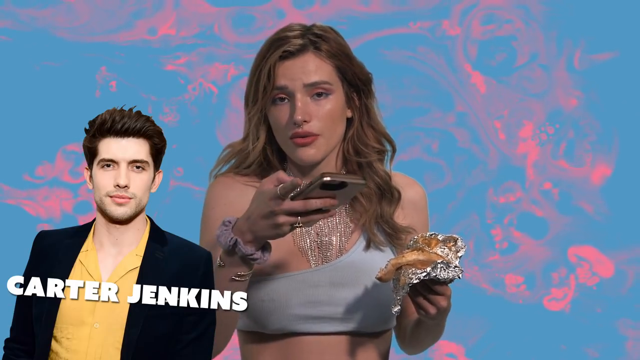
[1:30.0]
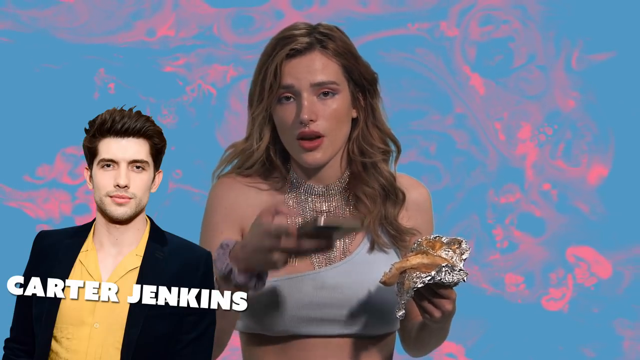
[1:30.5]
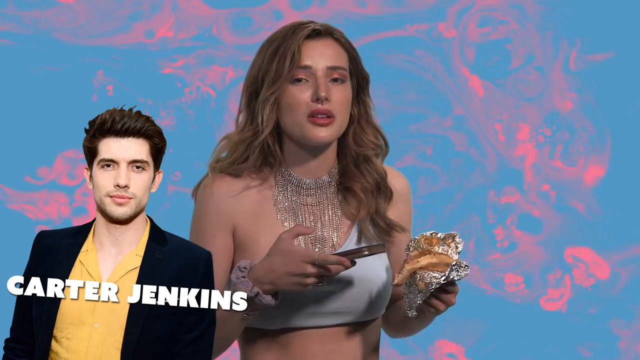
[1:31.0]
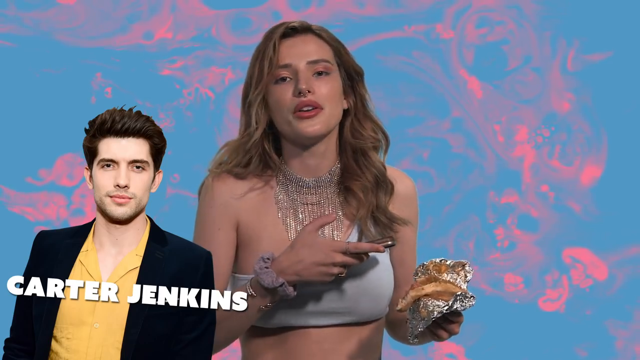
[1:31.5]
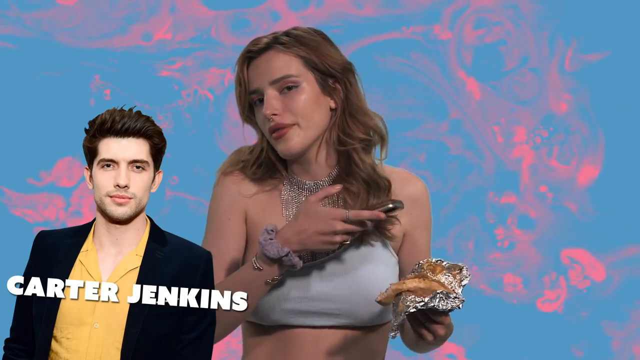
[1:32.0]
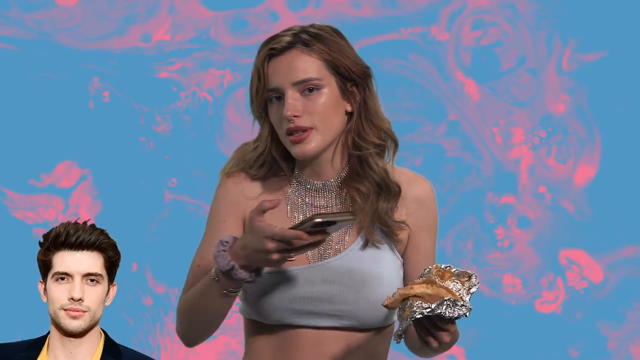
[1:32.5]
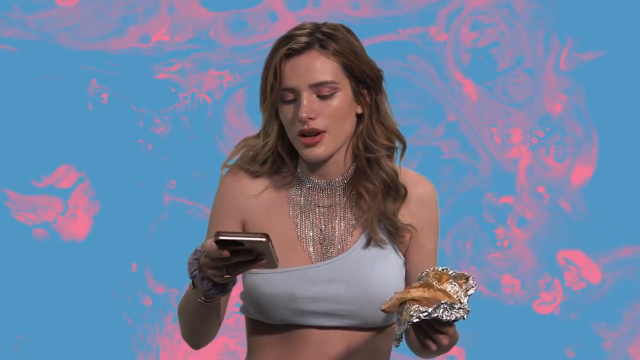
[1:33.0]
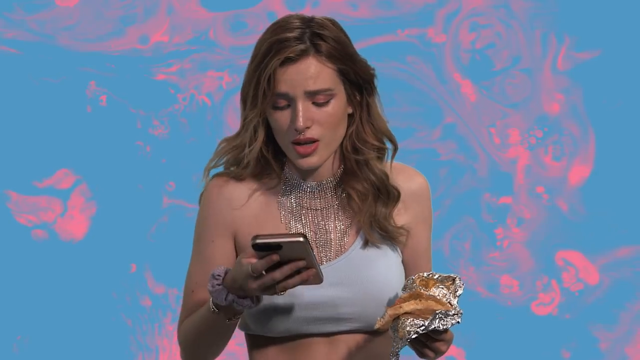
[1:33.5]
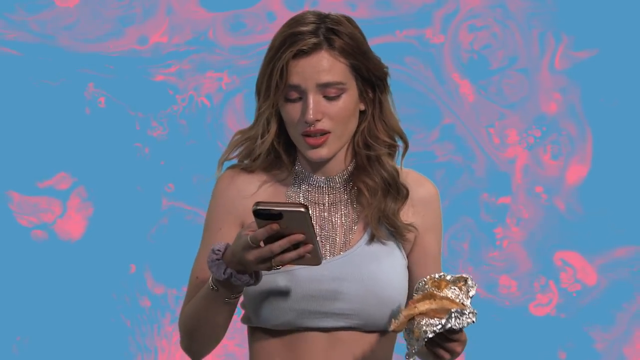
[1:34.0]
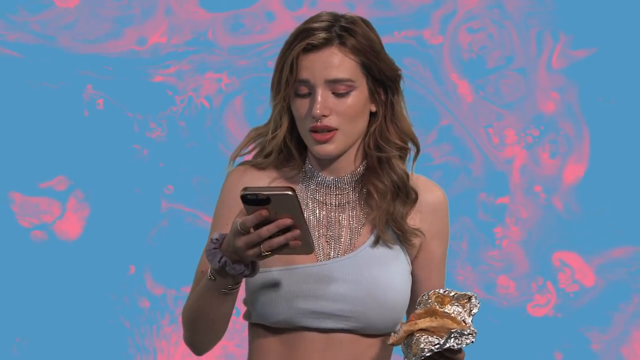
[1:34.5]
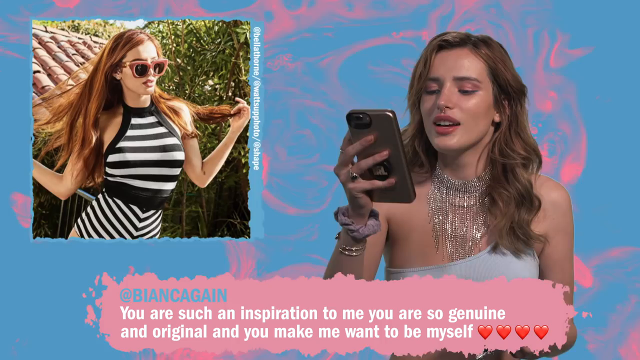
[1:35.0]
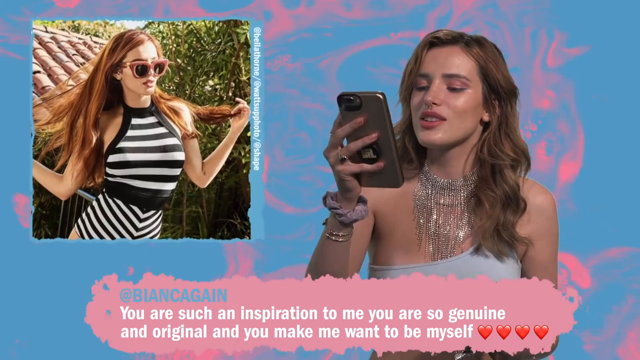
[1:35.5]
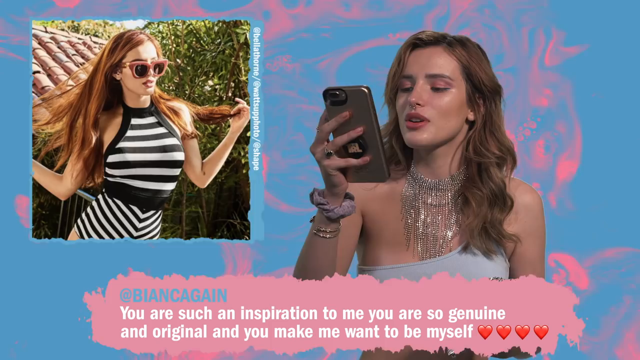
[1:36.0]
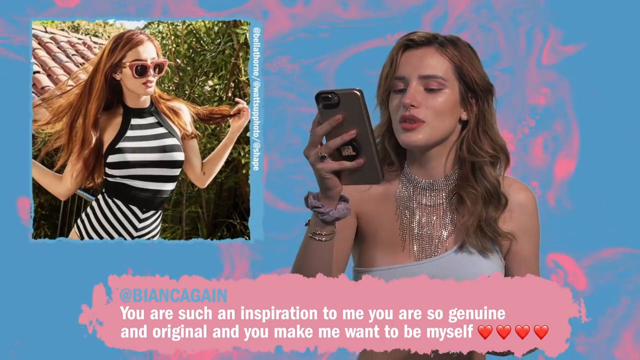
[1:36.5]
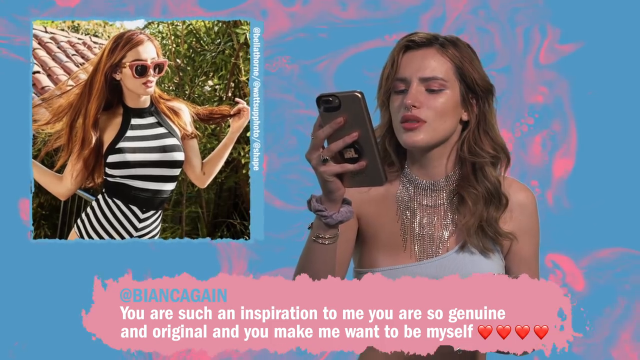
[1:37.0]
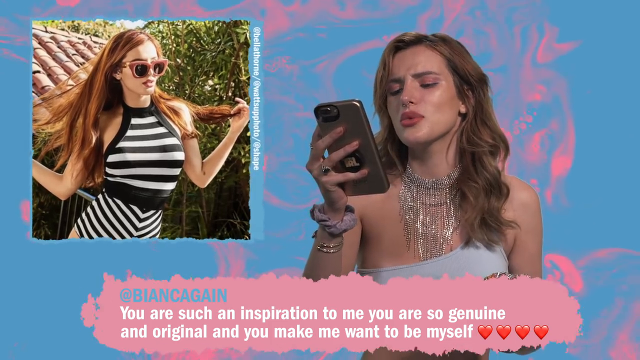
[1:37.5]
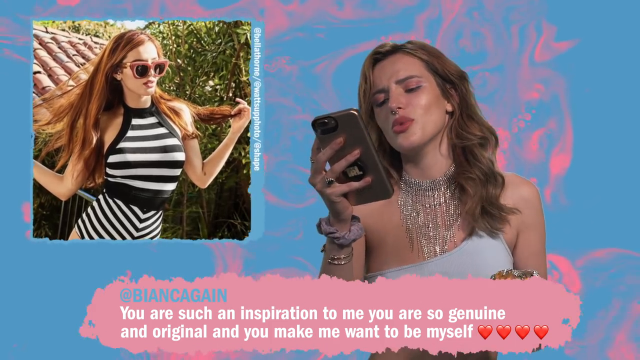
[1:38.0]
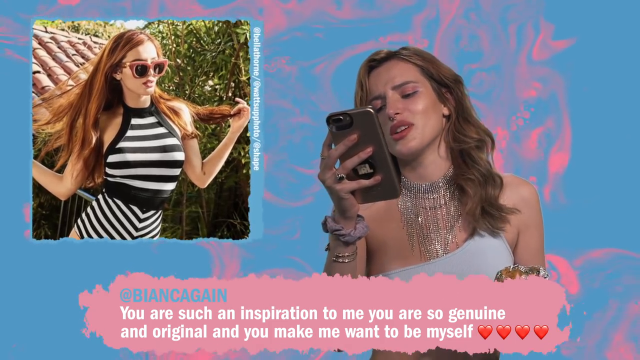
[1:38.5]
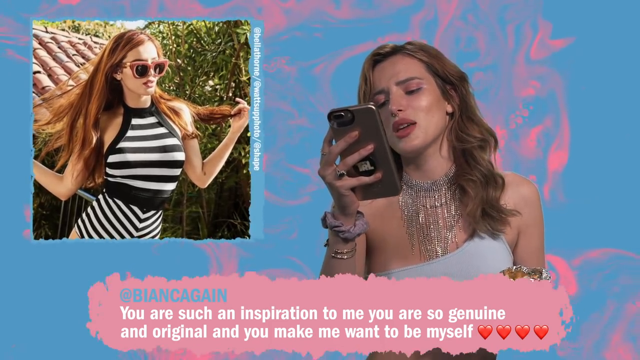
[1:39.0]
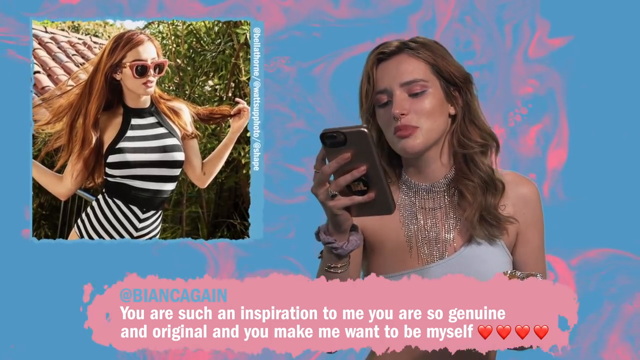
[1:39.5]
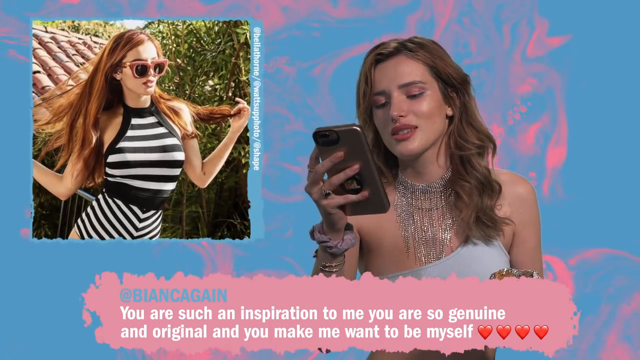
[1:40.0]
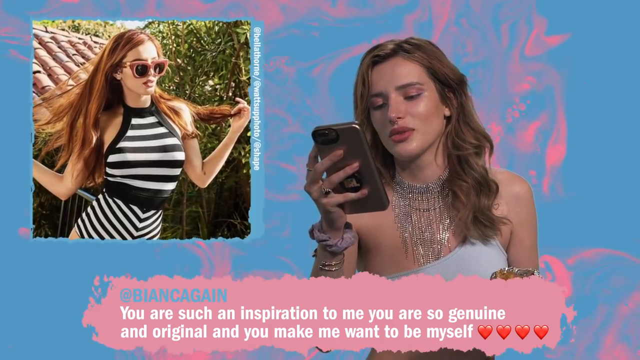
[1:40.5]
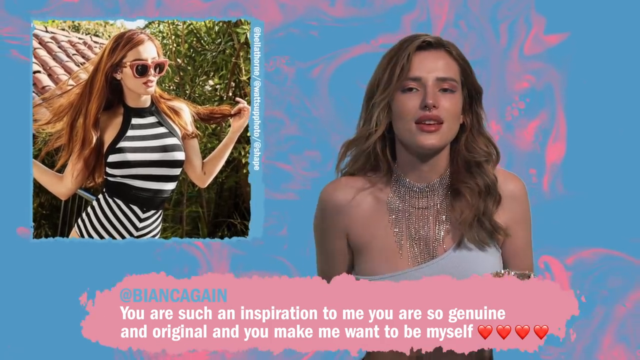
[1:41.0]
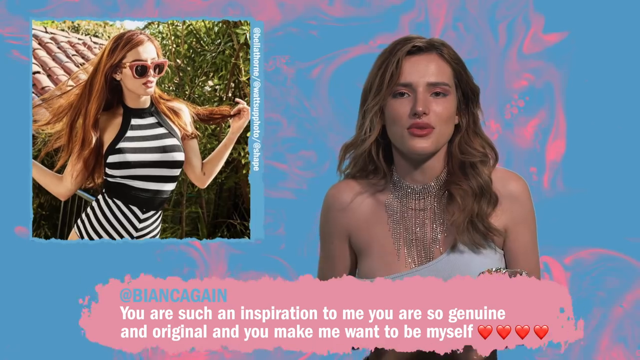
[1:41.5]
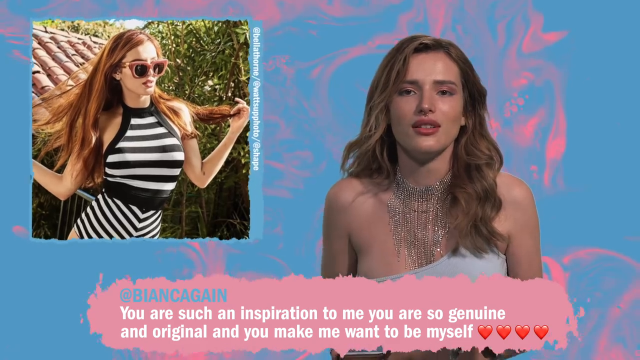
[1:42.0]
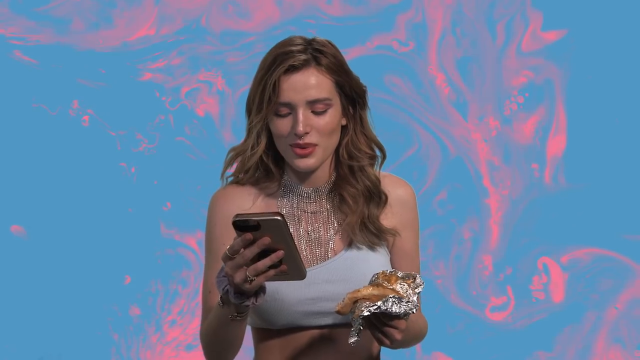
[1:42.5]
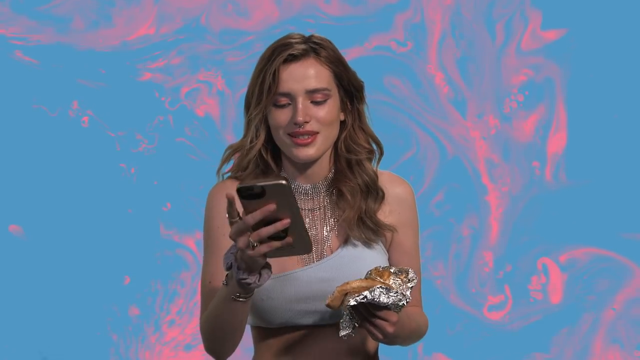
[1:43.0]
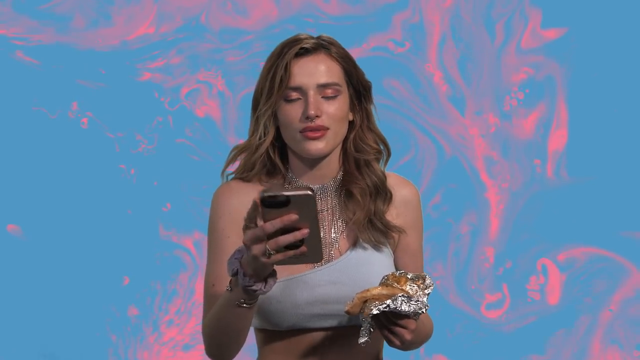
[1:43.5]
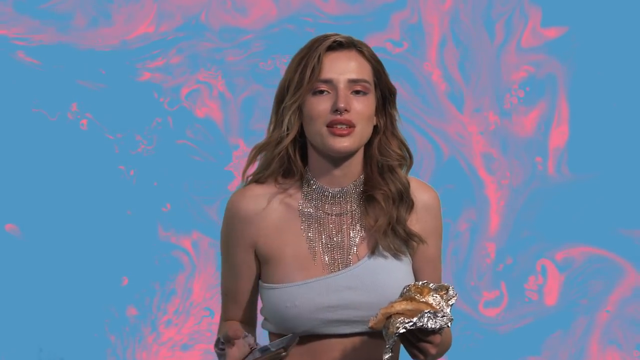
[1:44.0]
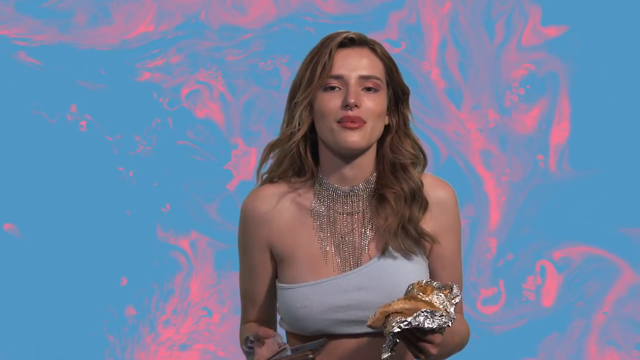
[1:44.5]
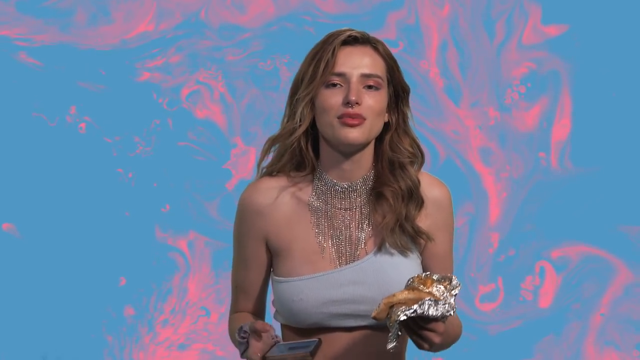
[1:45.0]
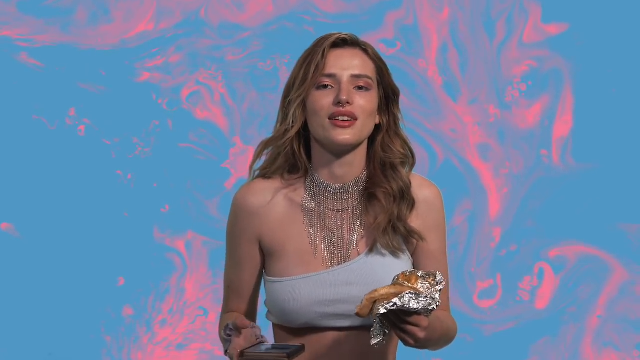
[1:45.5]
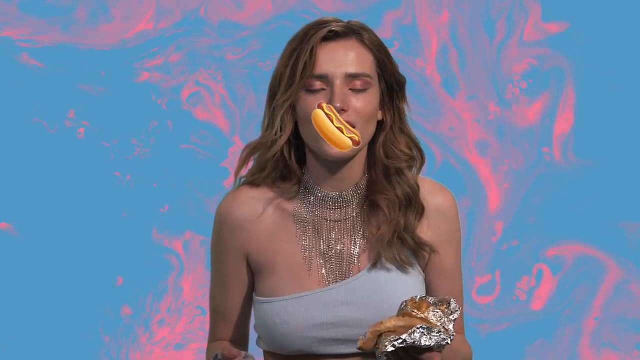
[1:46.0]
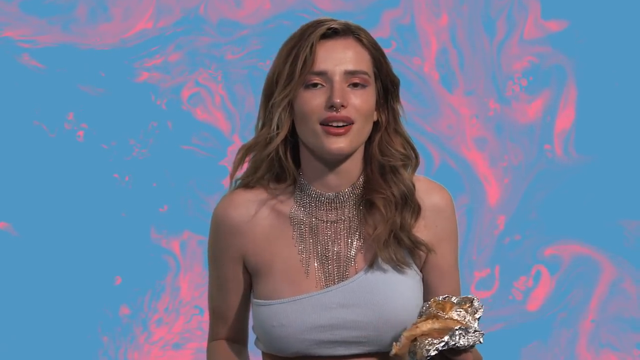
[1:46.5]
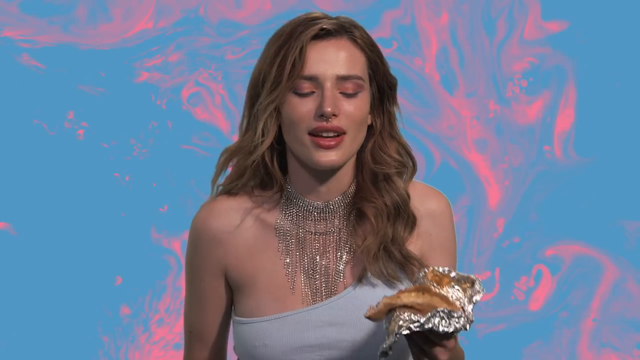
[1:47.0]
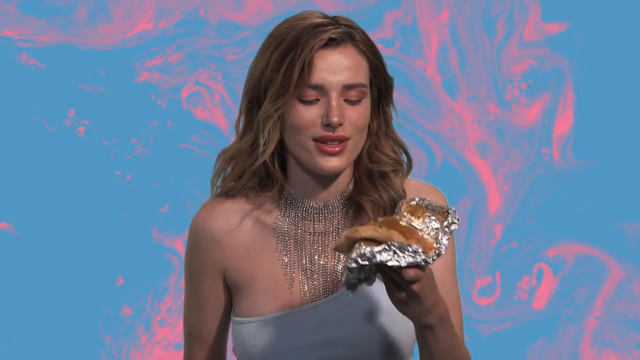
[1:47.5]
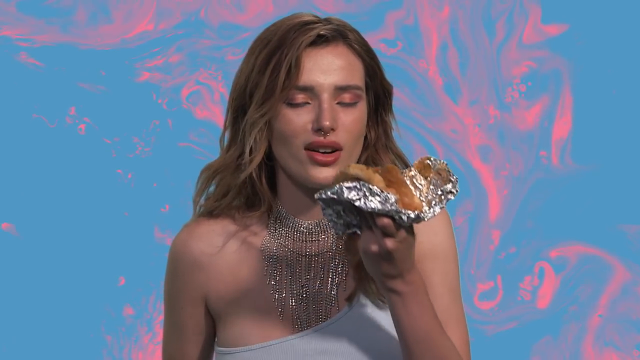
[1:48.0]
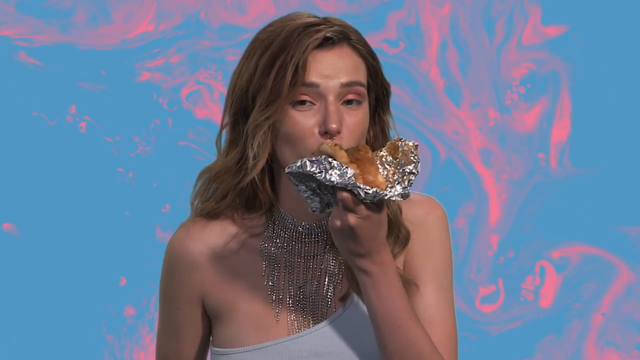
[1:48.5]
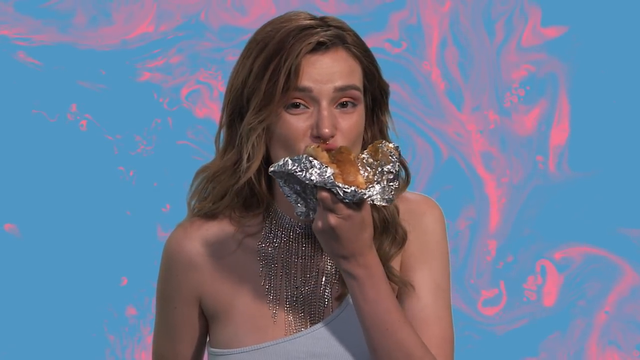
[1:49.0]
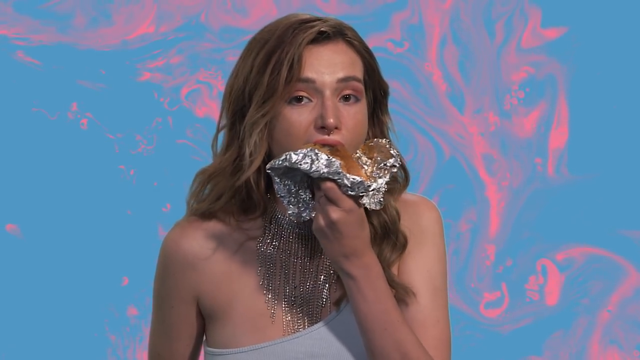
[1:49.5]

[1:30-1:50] Carter Jenkins remains in the lower left corner. Bella Thorne keeps taking bites from the hot dog in her left hand, her phone in her right, as she reads another comment. In the picture she wears a black and white striped dress outdoors in nature, with some trees and a house, including its top and roof tiles, in the background. The comment is in white letters with four heart emojis and says that Bella Thorne is an inspiration to the commenter. The commenter's name is in light blue letters in a pink font. The outline next to the photograph is light blue. The video's background is still the same with light touches of pink, though it seems to move a bit depending on the zoom on the woman. She seems pleased with the comment, appears to mouth "thank you," and then says something else while eating the hot dog.